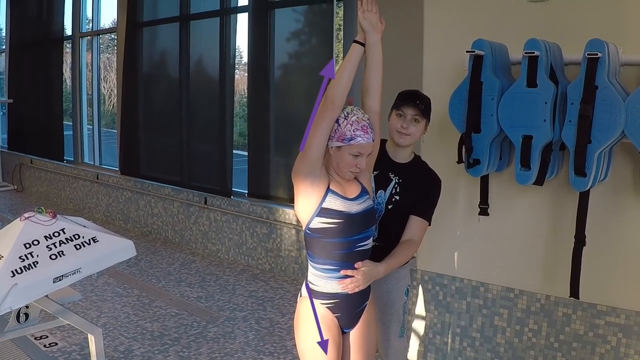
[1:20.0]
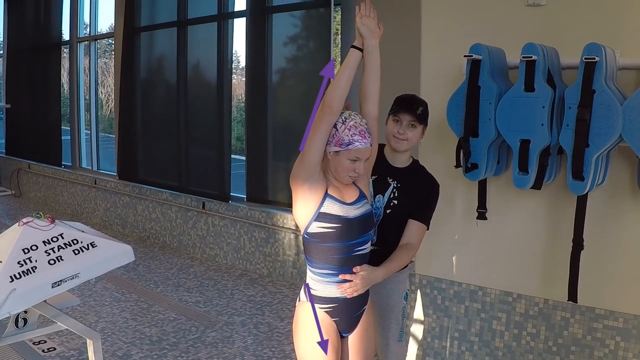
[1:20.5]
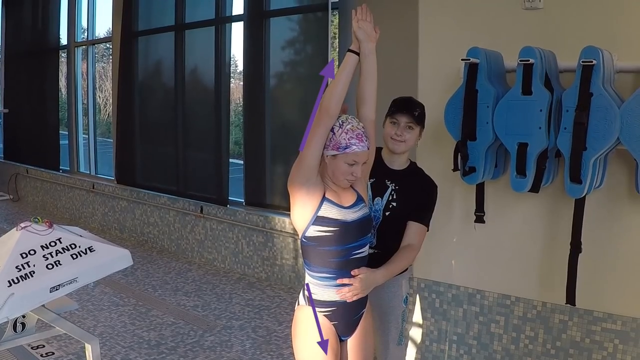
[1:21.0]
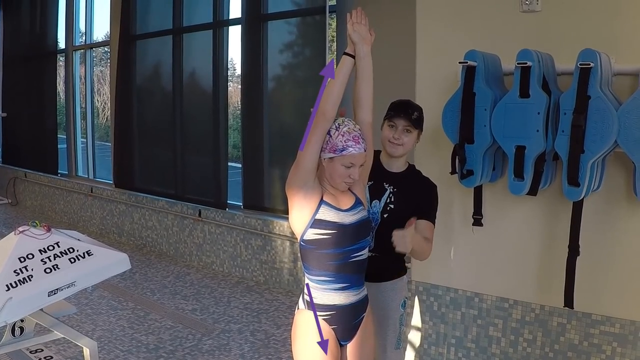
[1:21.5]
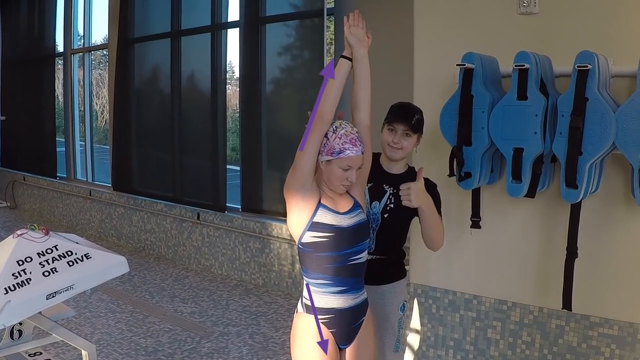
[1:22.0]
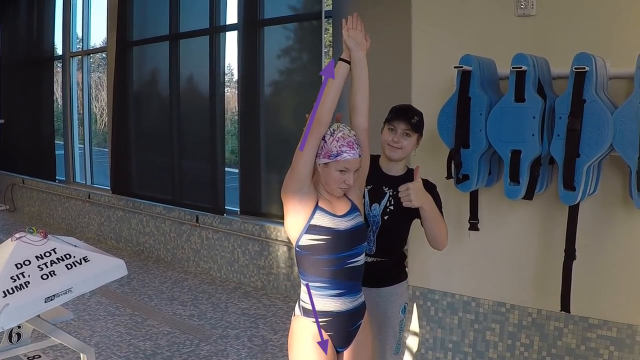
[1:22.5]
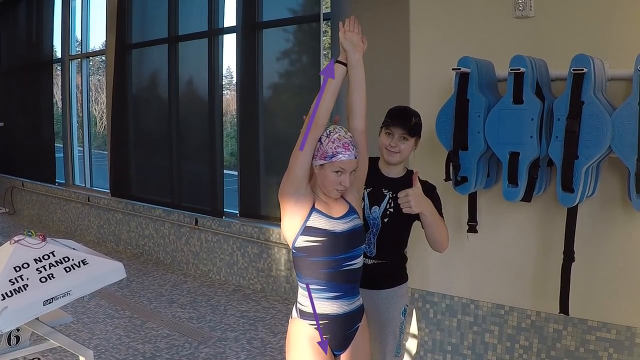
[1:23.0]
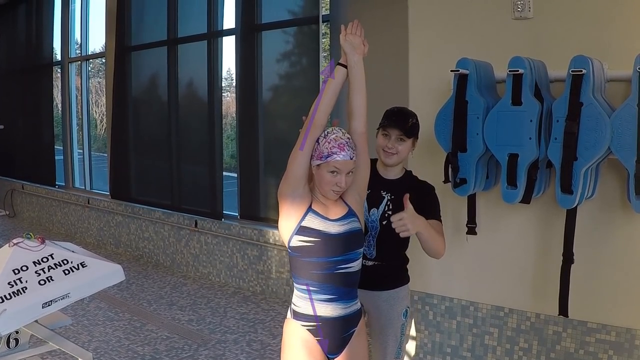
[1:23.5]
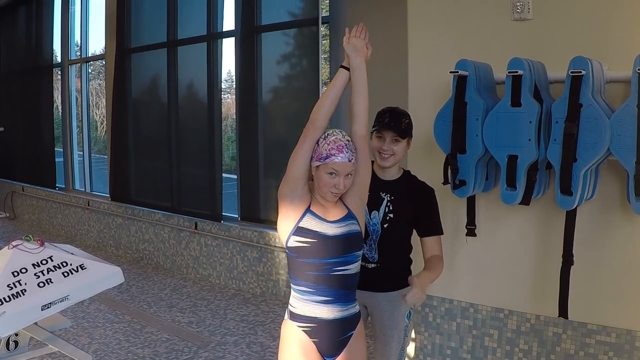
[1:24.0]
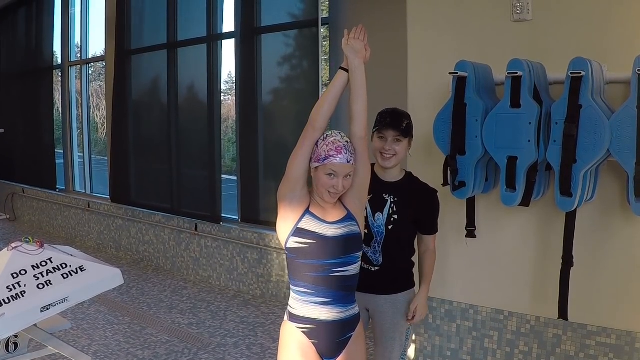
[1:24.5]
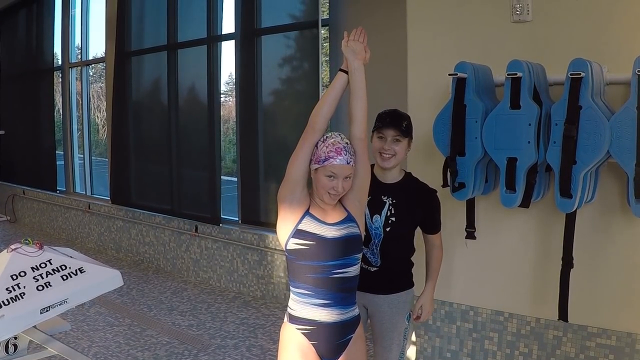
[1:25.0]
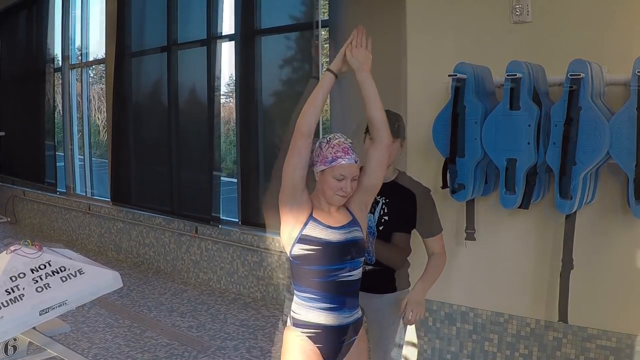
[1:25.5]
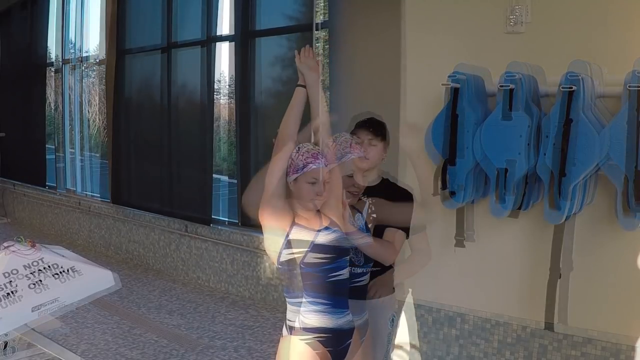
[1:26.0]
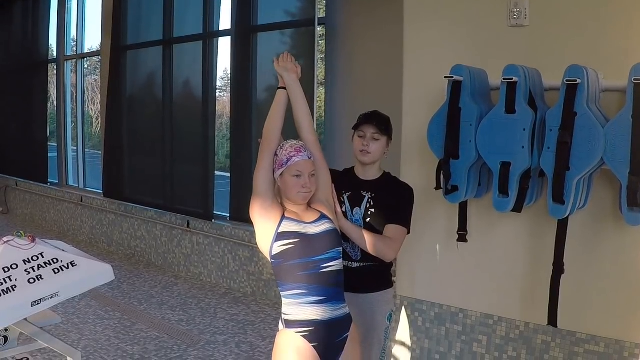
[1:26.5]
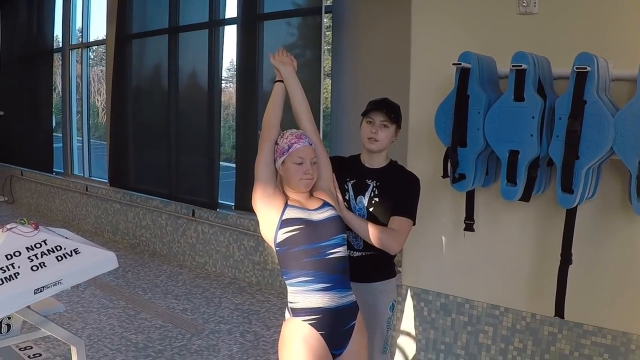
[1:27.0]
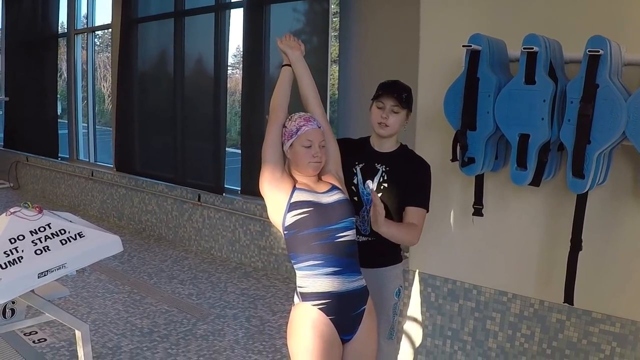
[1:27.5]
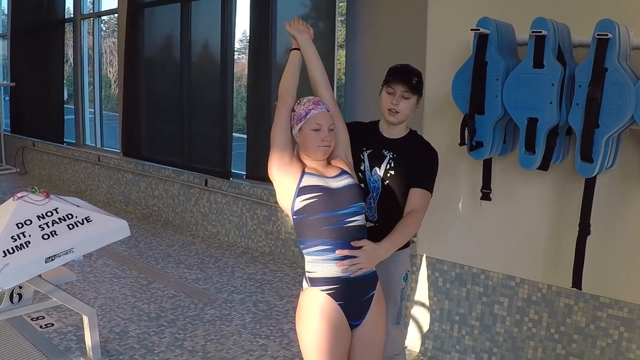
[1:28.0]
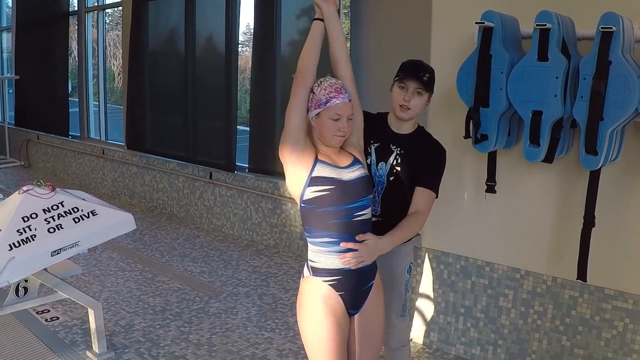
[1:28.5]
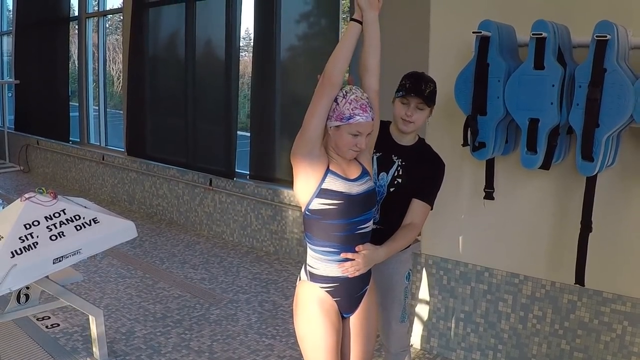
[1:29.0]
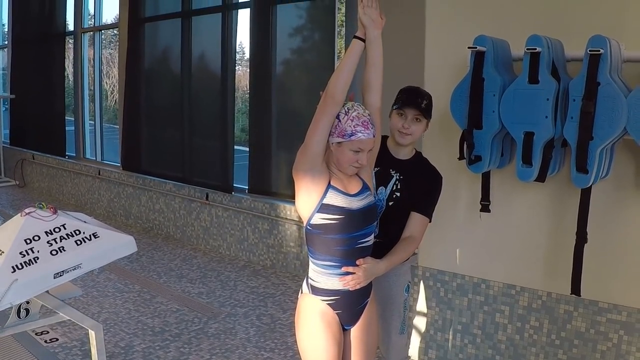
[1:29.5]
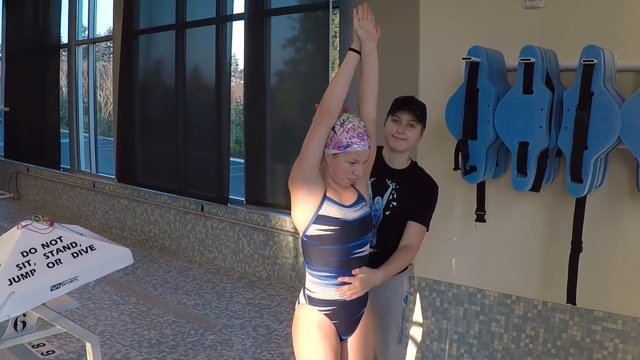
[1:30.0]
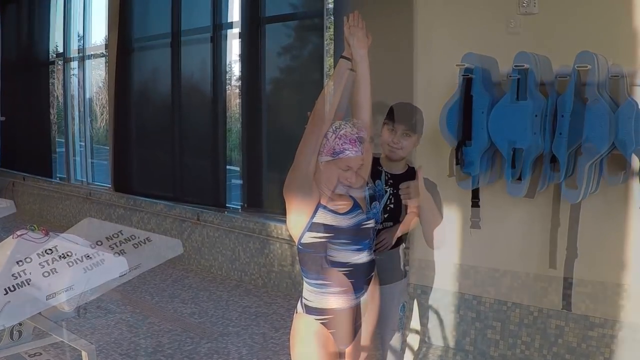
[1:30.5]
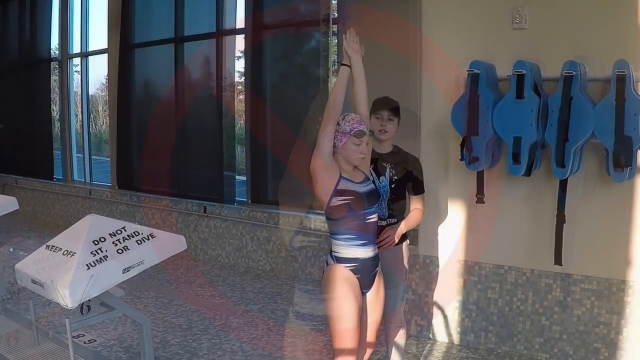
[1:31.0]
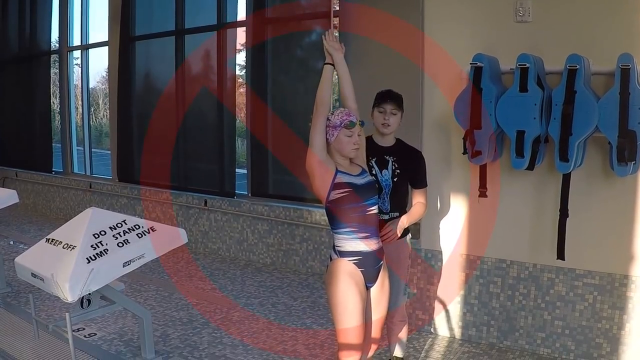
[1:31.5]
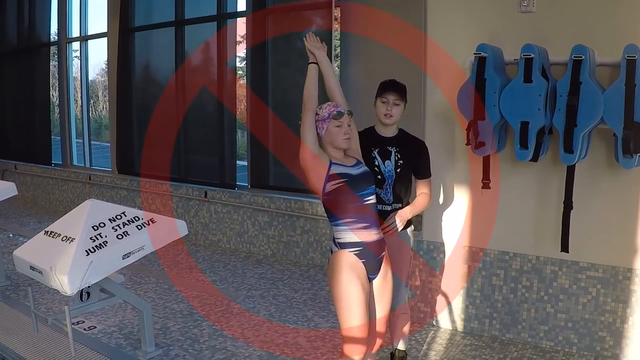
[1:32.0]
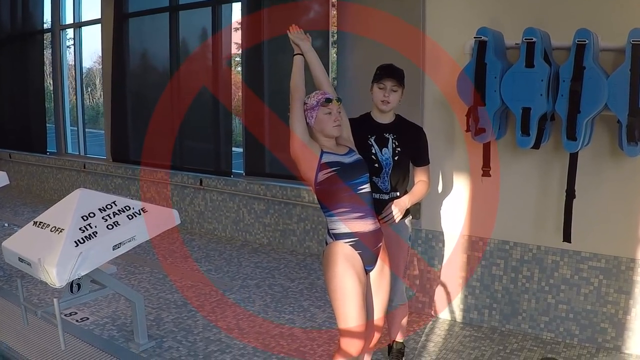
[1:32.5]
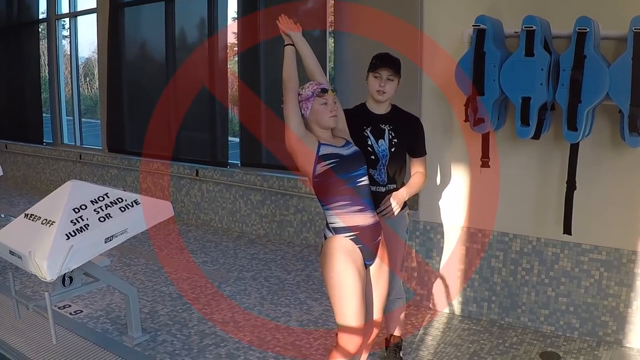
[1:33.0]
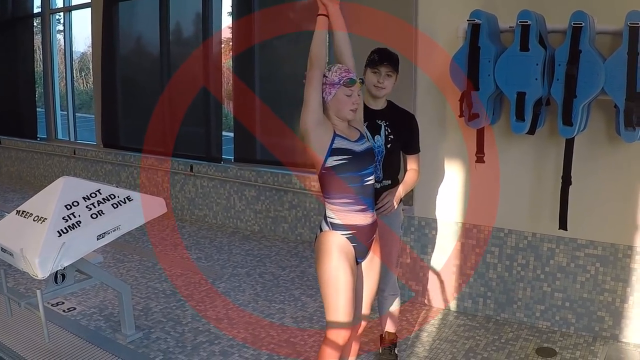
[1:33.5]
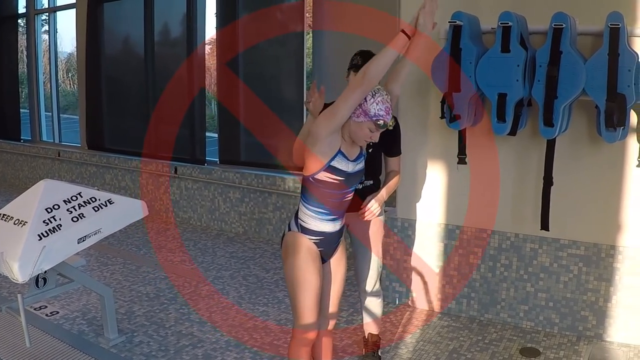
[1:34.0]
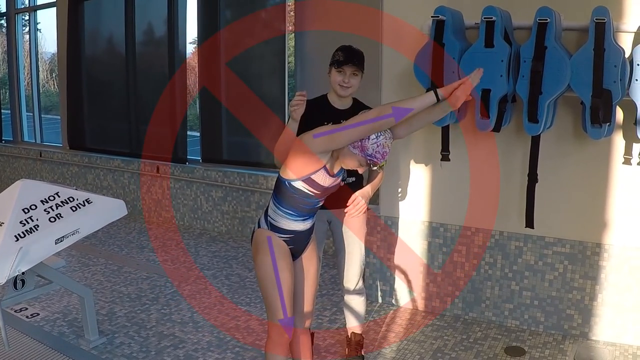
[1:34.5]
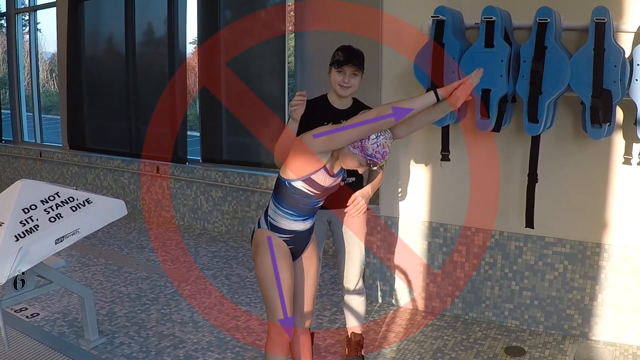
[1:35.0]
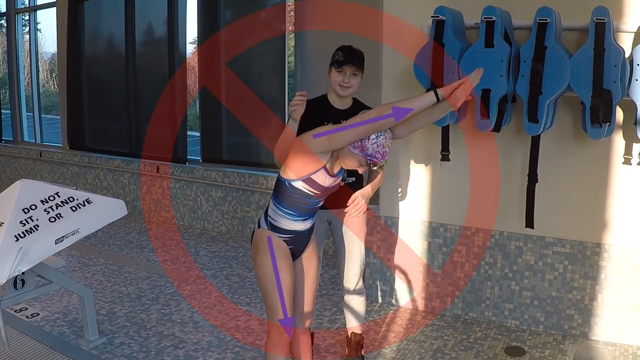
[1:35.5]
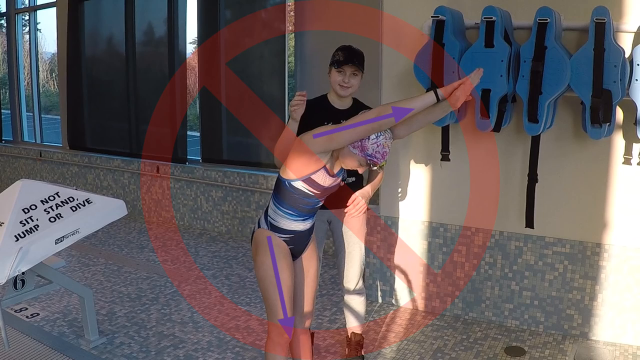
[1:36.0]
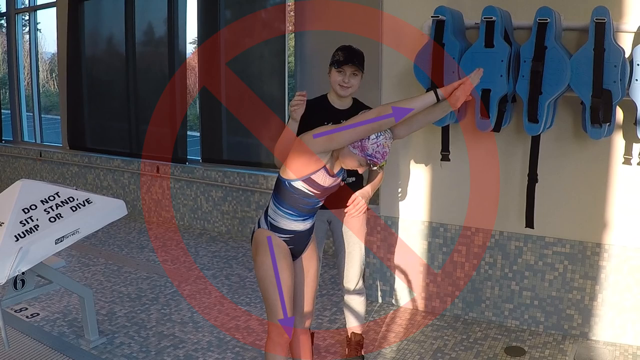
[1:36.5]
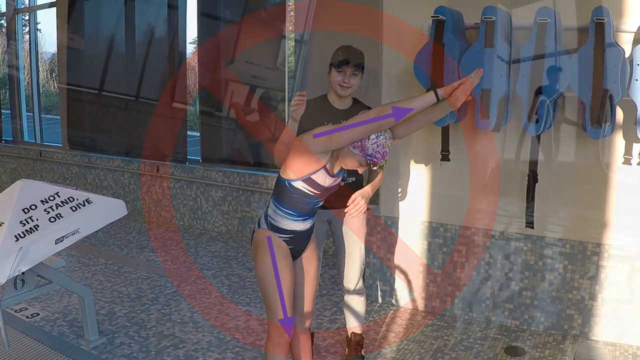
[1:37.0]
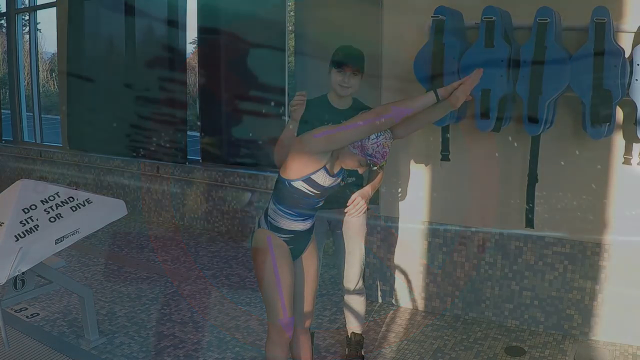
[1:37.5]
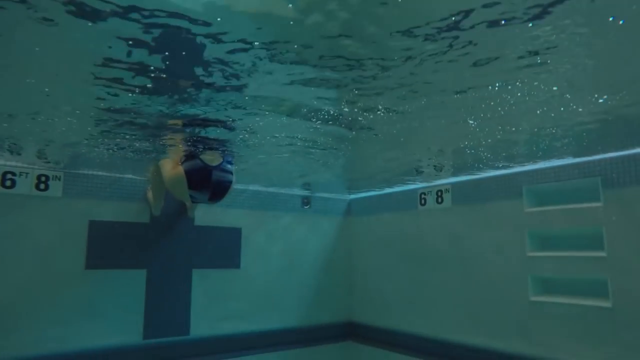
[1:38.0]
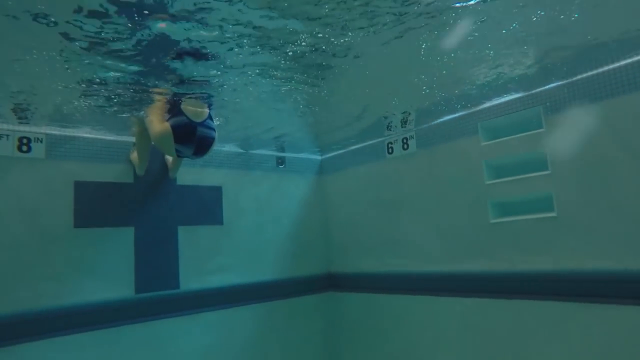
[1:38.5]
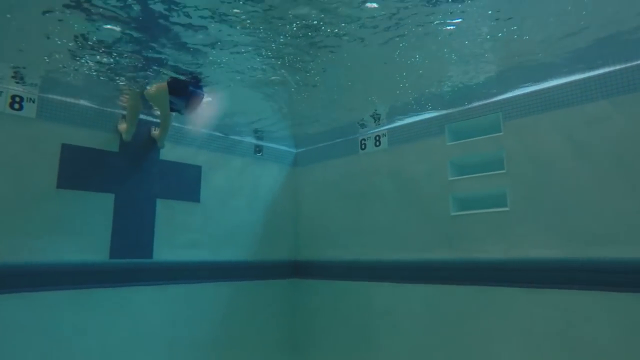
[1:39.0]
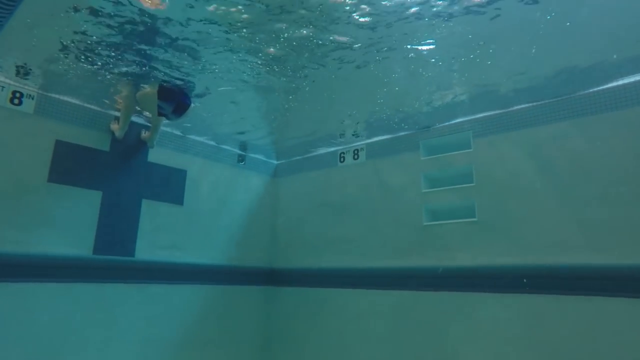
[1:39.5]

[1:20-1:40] The female swimmer stands upright outside the pool with her arms outstretched above her head, her hands clasped one over another, her fingers straight and her biceps by her ears. The trainer stands alongside her with one hand on the swimmer's lower back and her left arm crooked in a thumbs up. The trainer lowers her left arm to her side as the scene cuts to the swimmer leaning and rocking backward, arching her back as if entering the water, while the trainer supports her lower back with her right hand. The video cuts to the swimmer rocking backward in the same arching motion and then propelling herself forward faster, and a big red circle with an arrow or line through it appears, showing that this is not the correct form. Finally the scene cuts to the swimmer back in the water with her feet pressed against the pool wall and her bottom in the water, while her top half is out of the water and out of view.